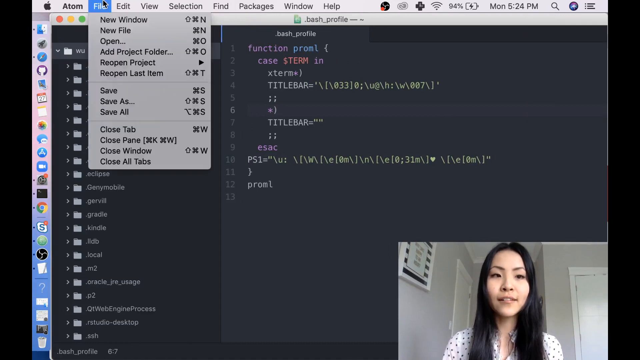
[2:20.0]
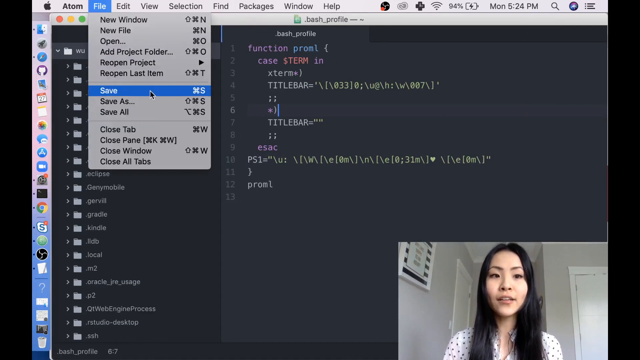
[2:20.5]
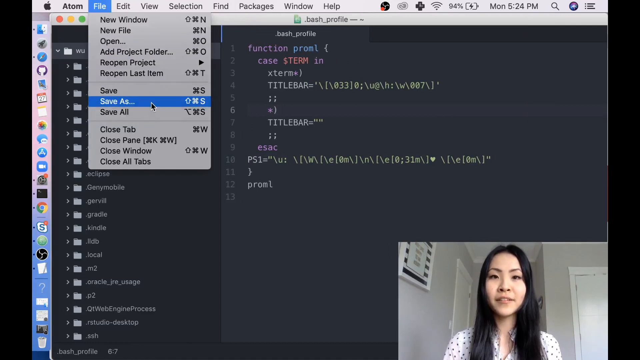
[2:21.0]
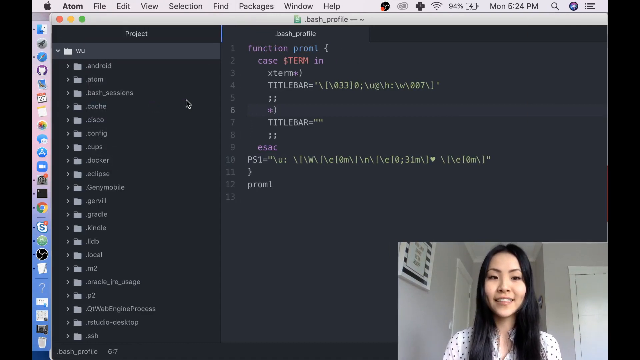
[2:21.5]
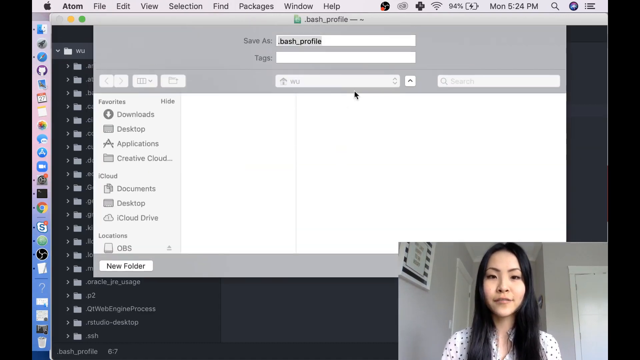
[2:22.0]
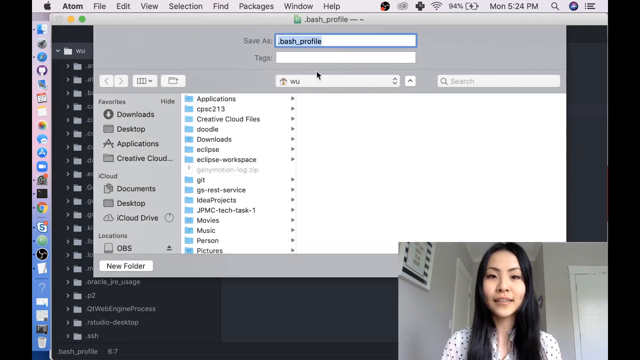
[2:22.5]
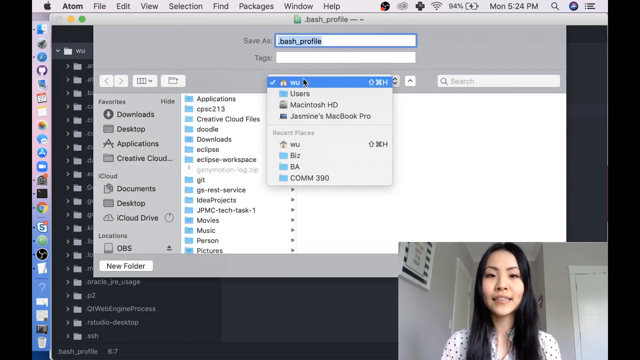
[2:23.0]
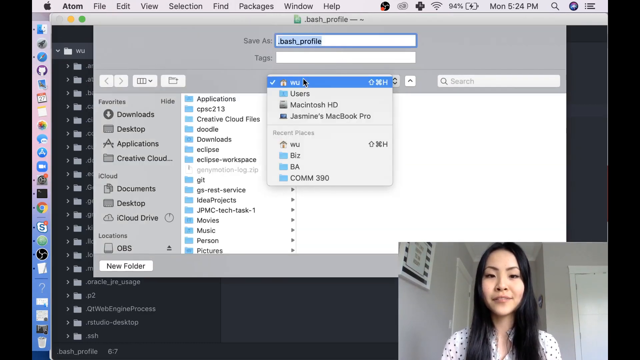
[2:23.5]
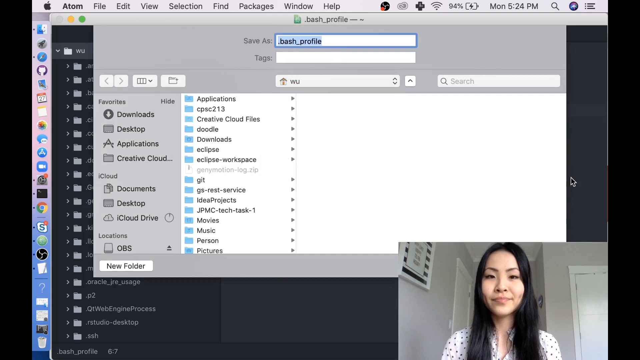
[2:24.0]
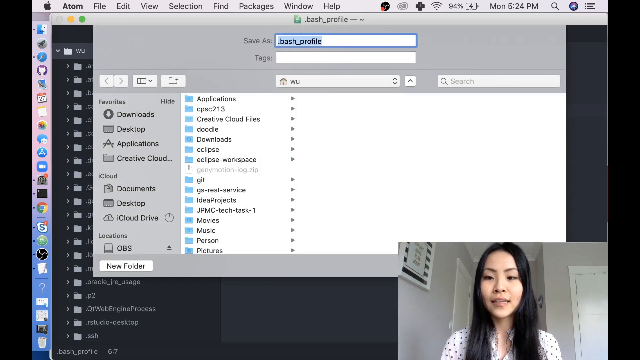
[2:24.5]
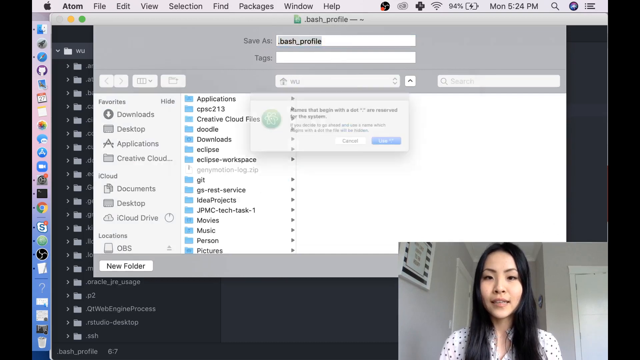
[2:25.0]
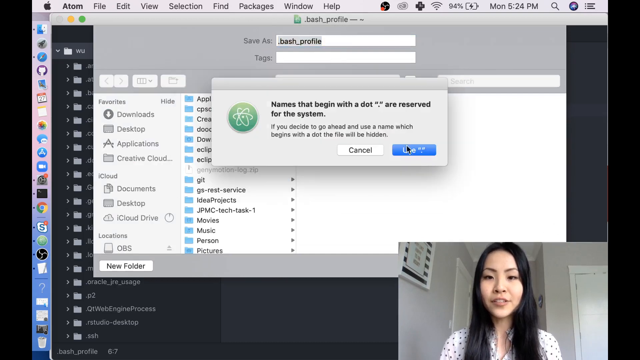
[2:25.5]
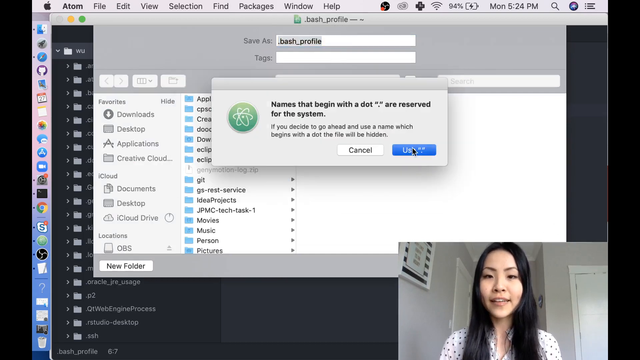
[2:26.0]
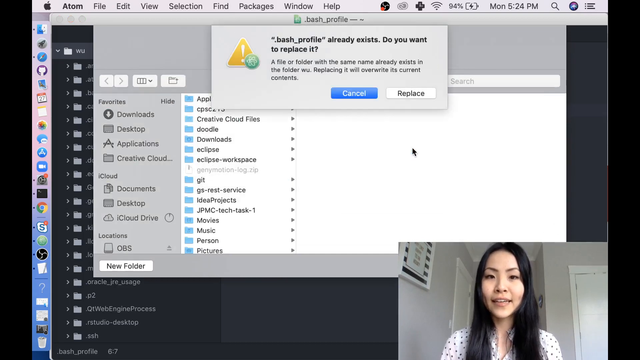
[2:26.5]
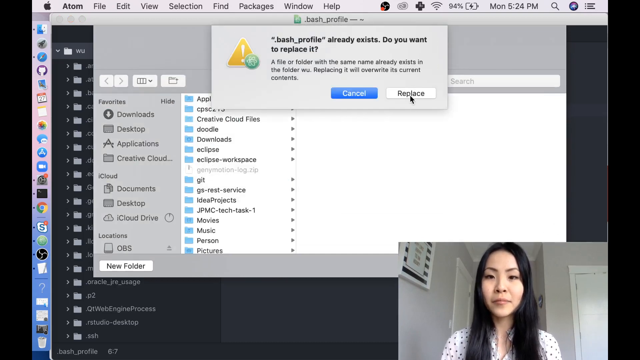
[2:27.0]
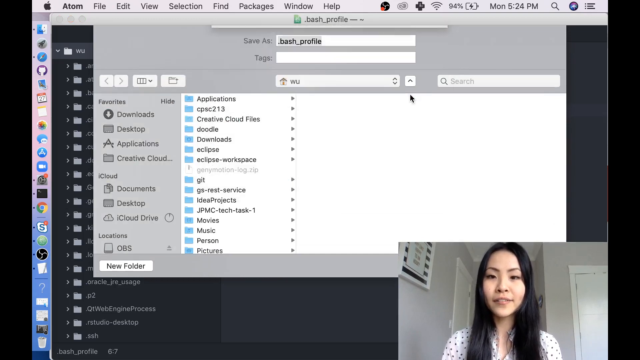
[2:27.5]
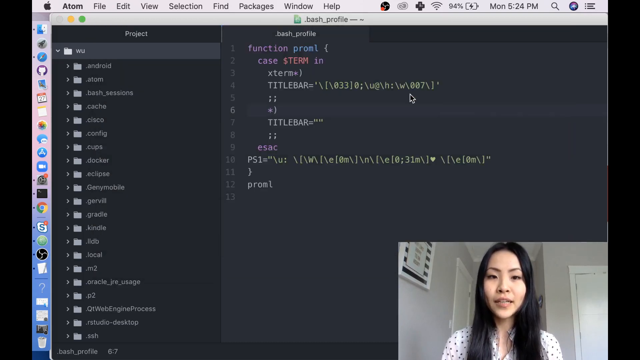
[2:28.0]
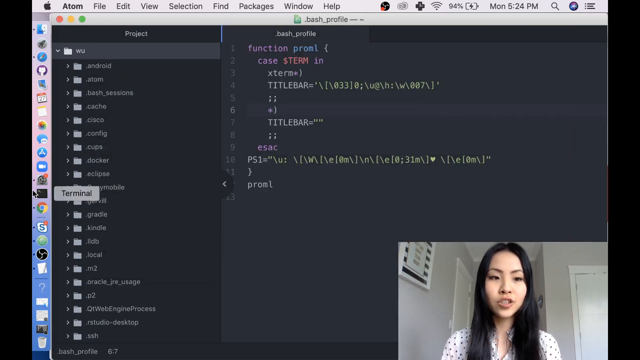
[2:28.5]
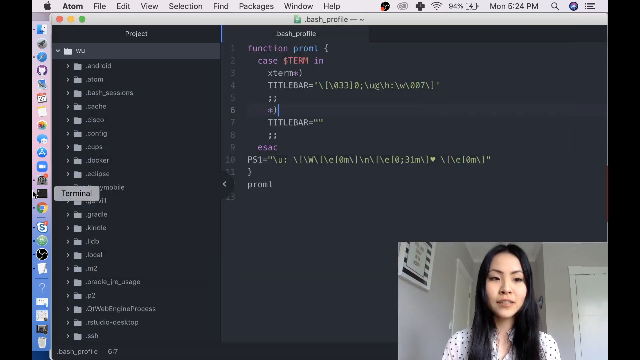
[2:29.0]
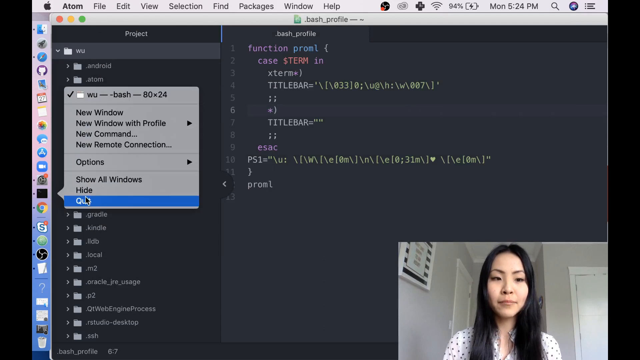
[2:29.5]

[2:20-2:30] An Asian woman with yellow-tinted skin and black hair is in the bottom right-hand section of the screen. She shows different areas of the code, including a file section with different sections that can be clicked on.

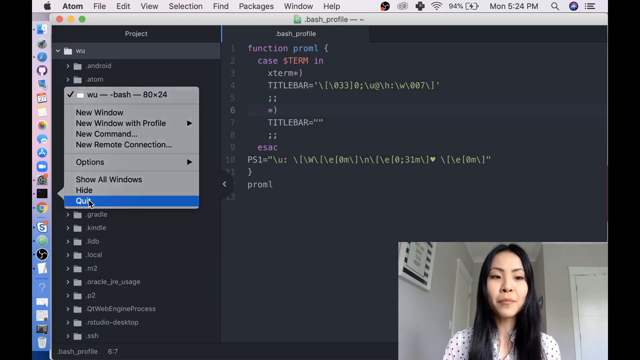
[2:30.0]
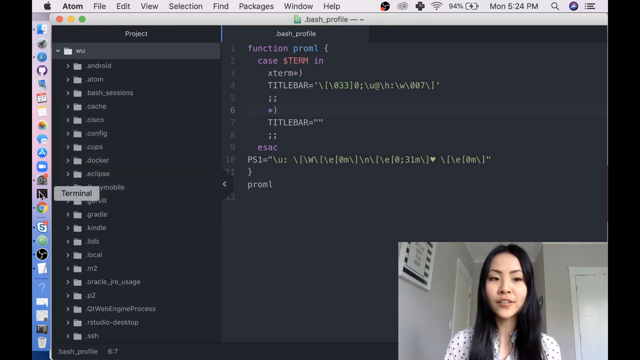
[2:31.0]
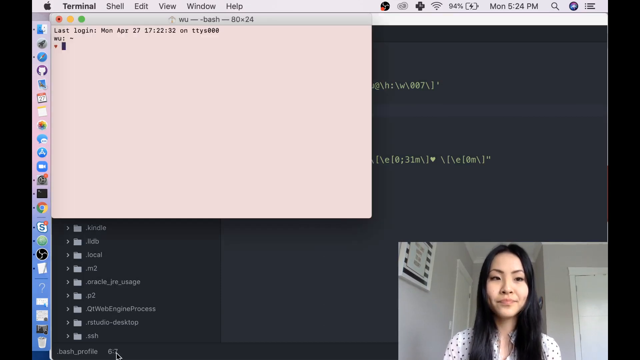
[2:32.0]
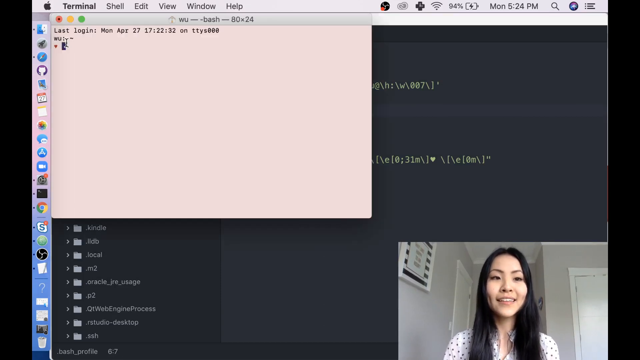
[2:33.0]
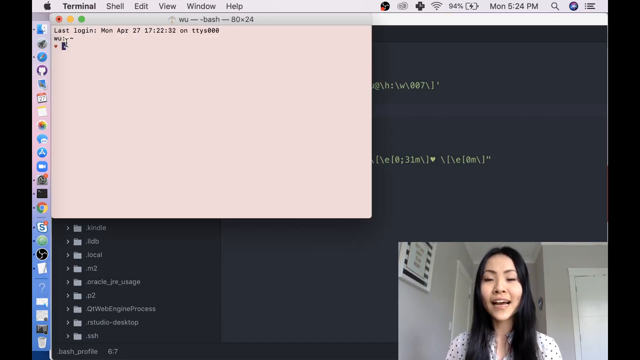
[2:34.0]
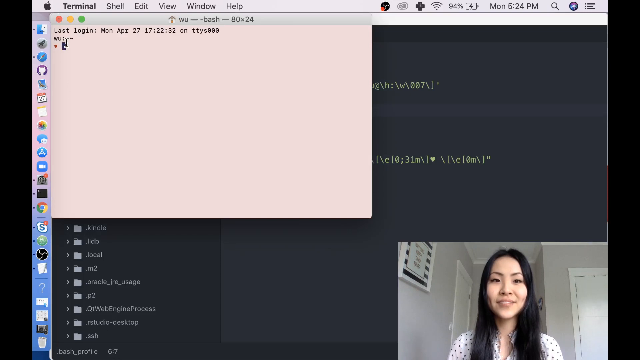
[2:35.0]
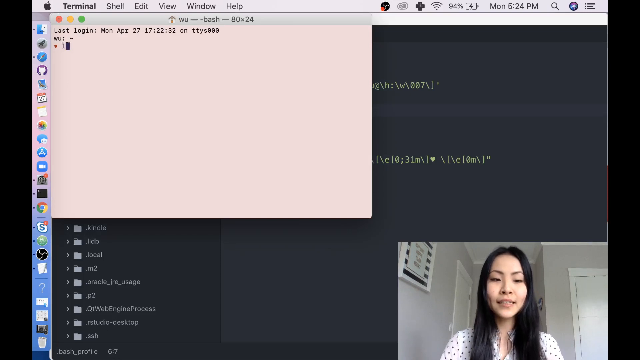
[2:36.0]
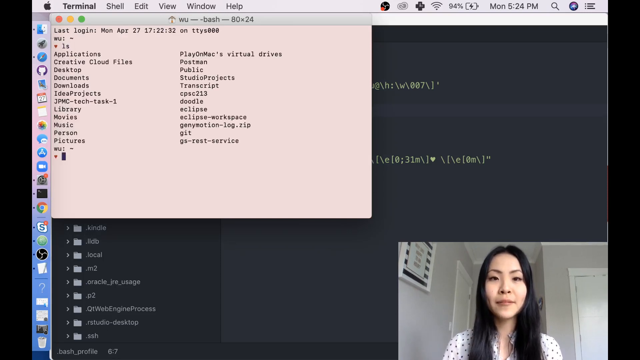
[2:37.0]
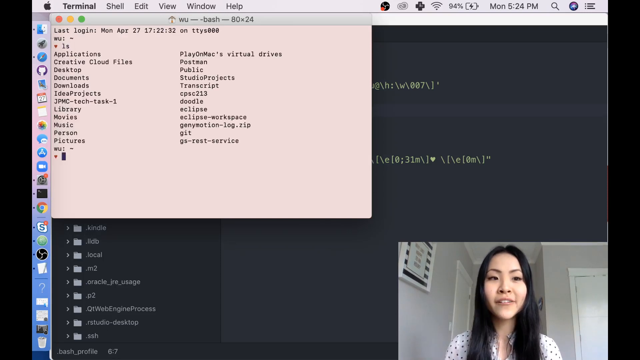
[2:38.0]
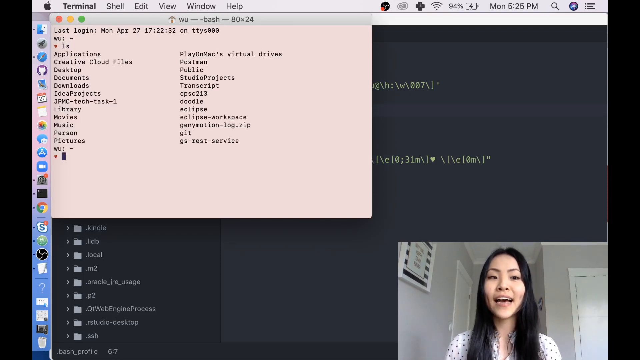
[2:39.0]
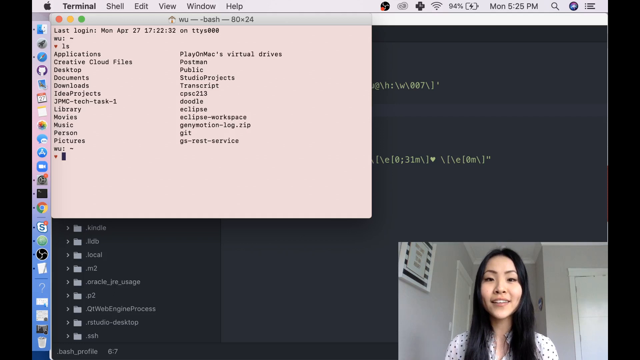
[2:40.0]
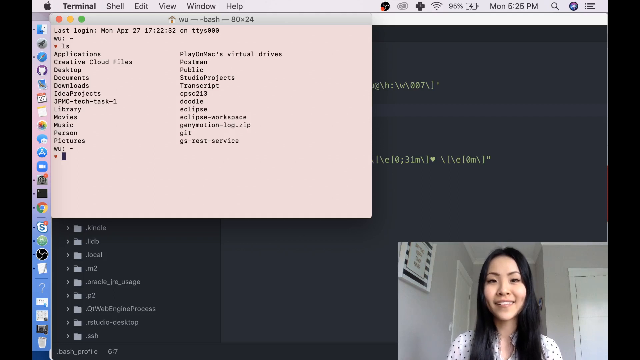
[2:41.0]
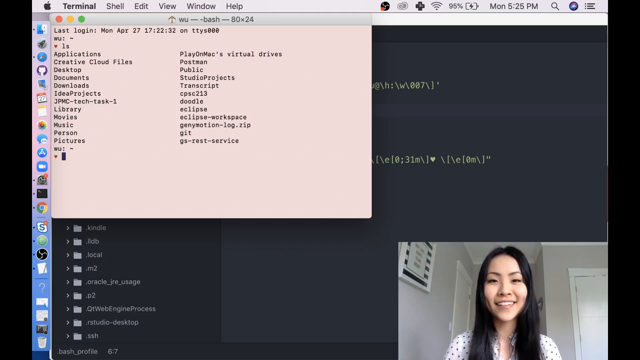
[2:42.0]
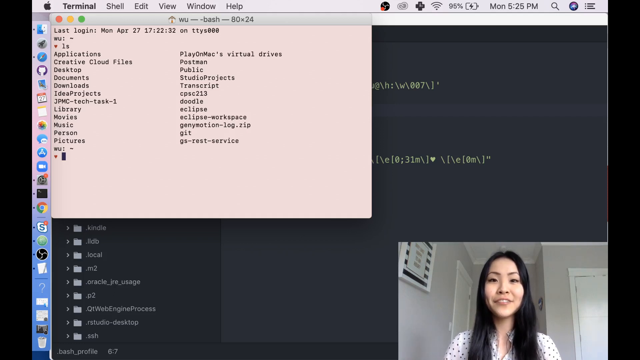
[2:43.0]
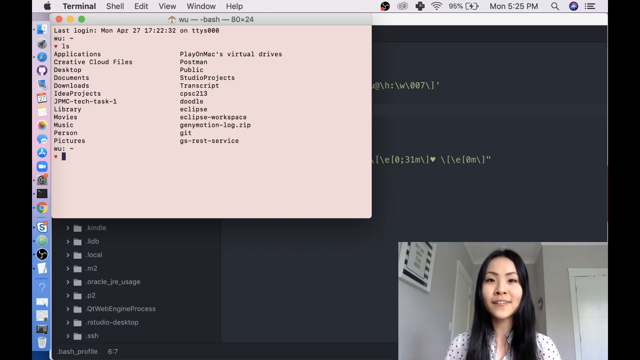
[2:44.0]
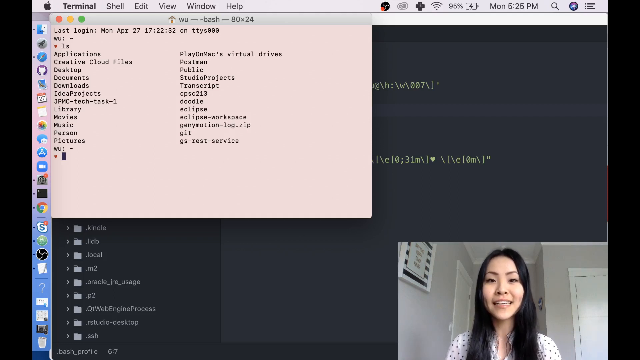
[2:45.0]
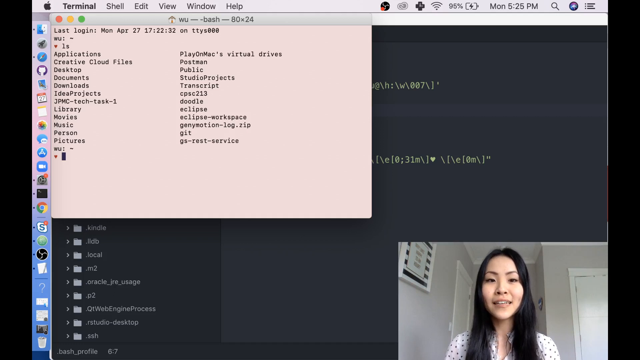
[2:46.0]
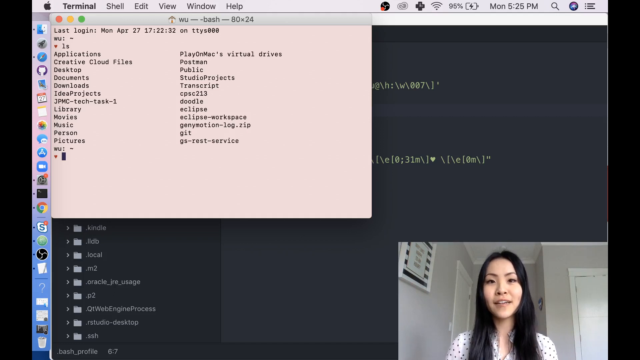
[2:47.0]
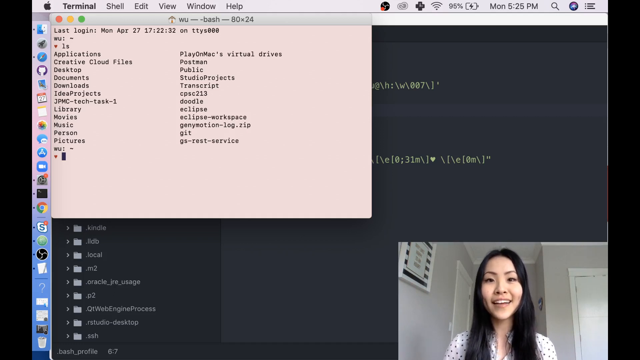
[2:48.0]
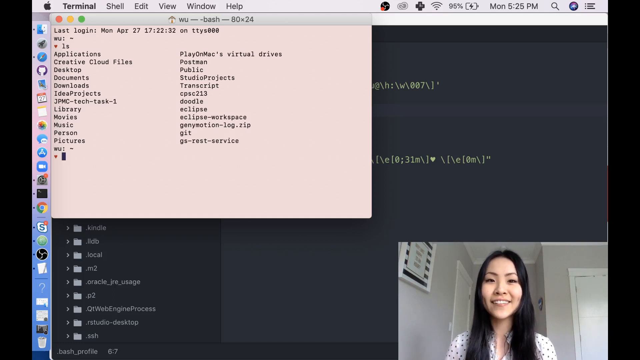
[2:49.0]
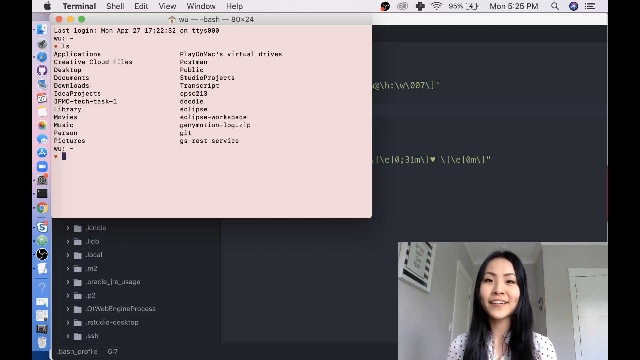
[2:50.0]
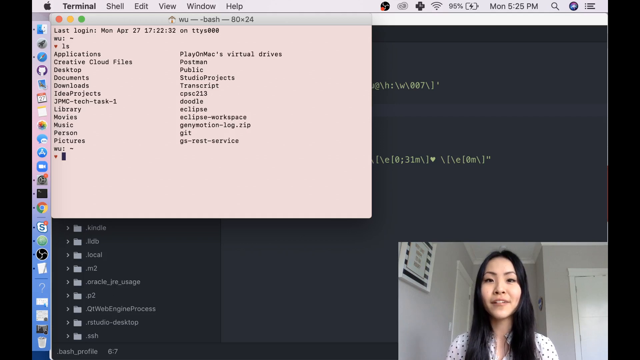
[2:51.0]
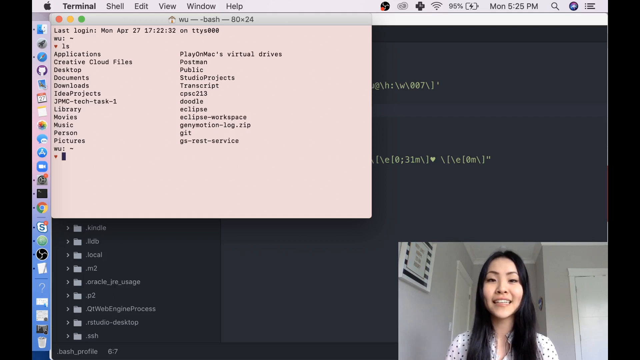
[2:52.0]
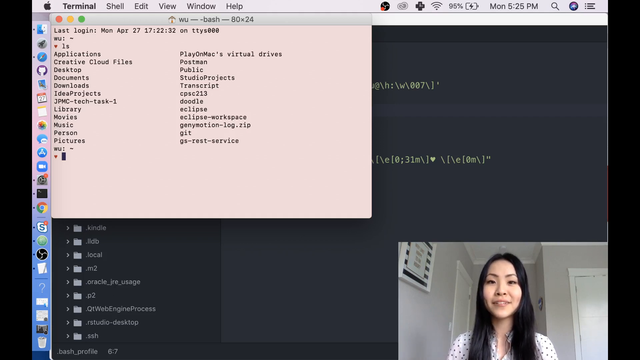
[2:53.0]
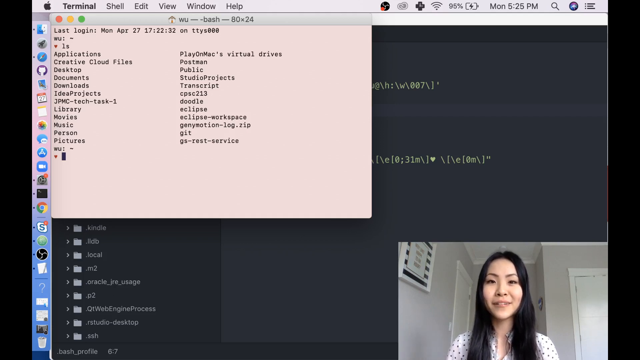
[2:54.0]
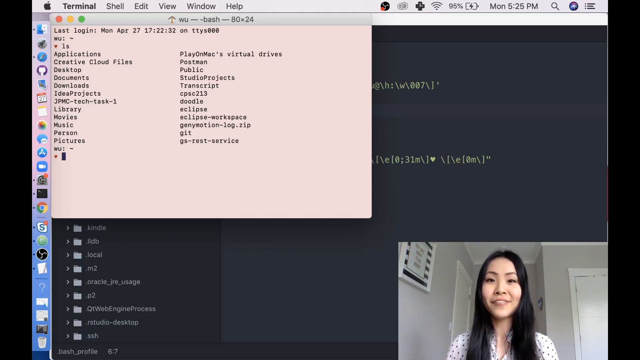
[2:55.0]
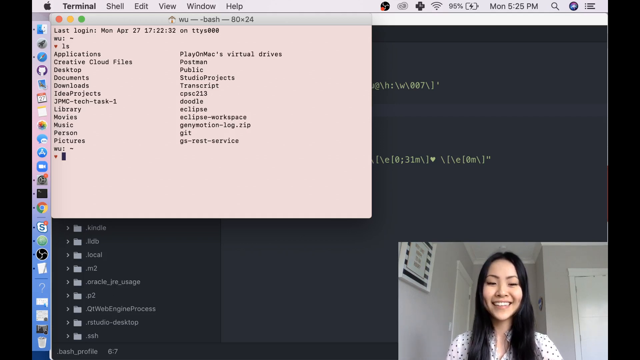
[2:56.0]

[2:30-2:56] An Asian woman is in the bottom right-hand section of the screen while code is shown. The code is organized in a box with a completely black background, and the text is yellow or red.